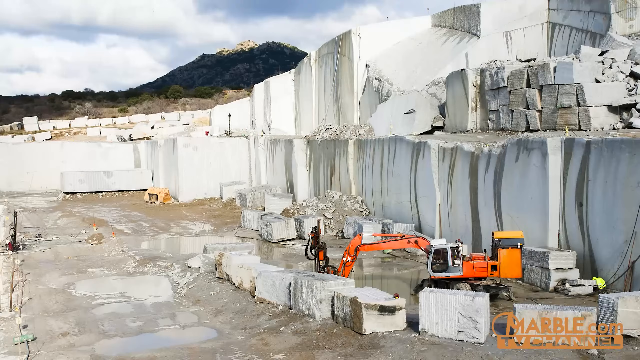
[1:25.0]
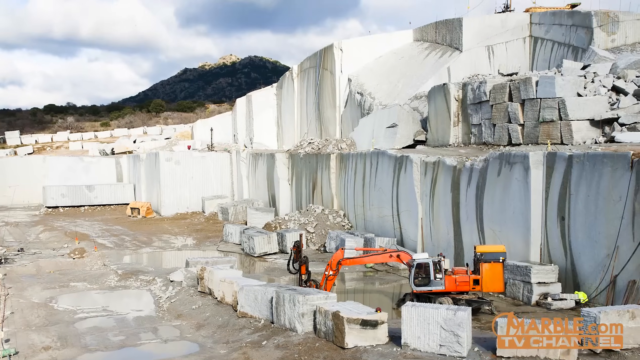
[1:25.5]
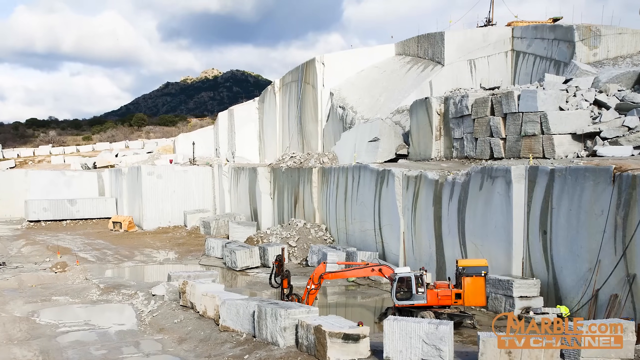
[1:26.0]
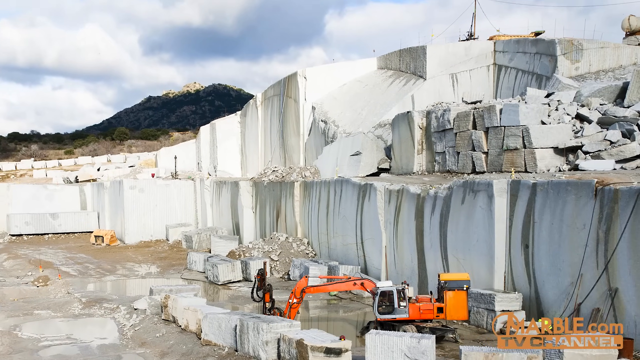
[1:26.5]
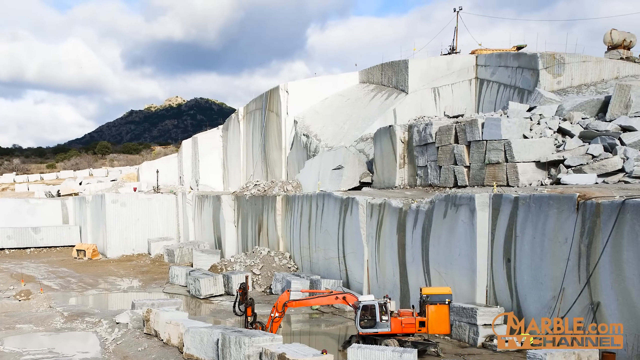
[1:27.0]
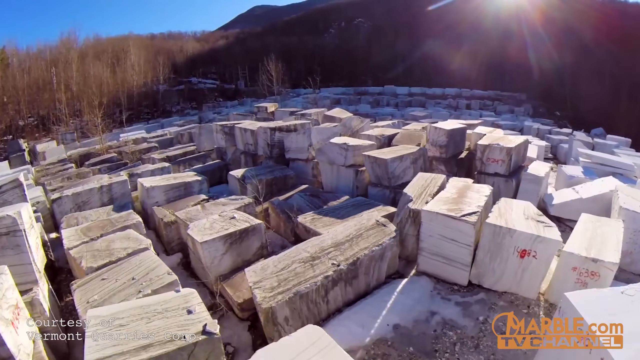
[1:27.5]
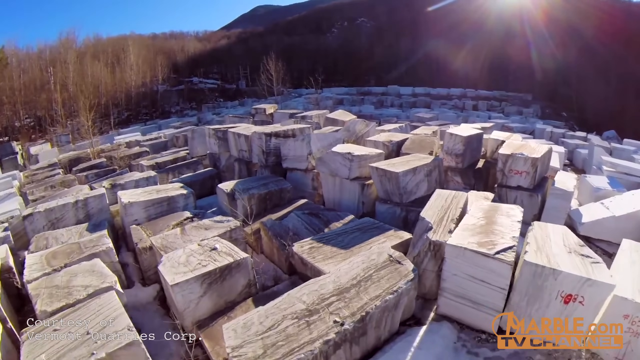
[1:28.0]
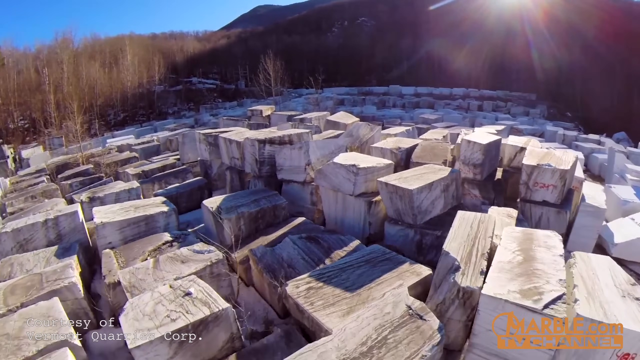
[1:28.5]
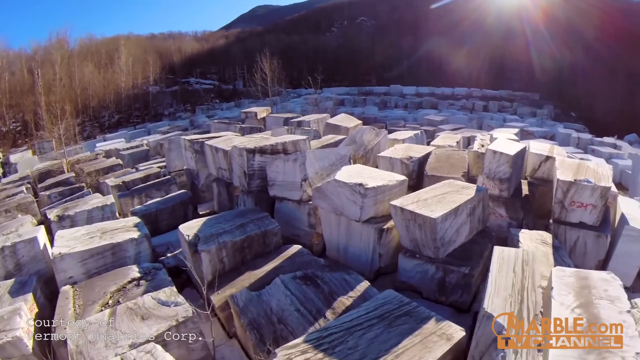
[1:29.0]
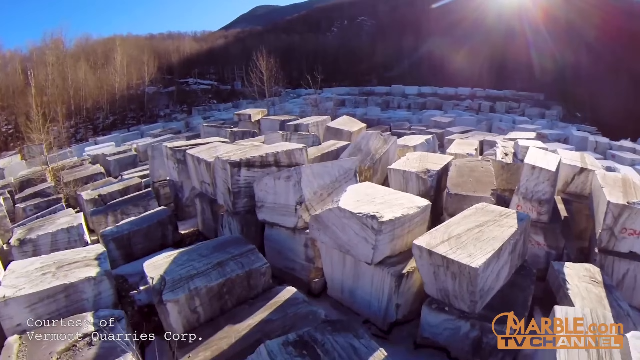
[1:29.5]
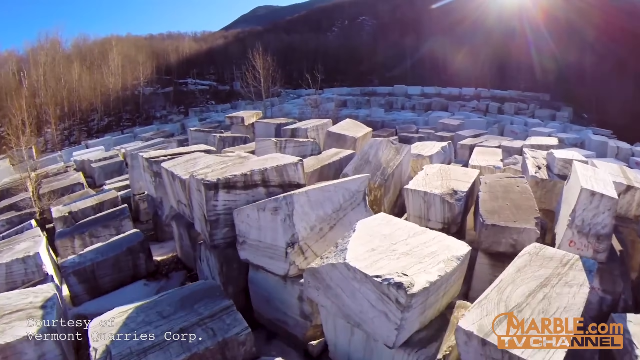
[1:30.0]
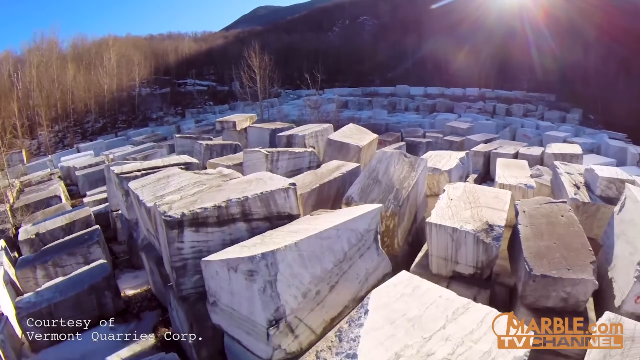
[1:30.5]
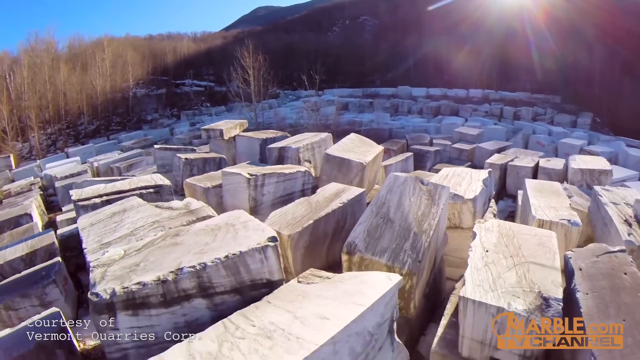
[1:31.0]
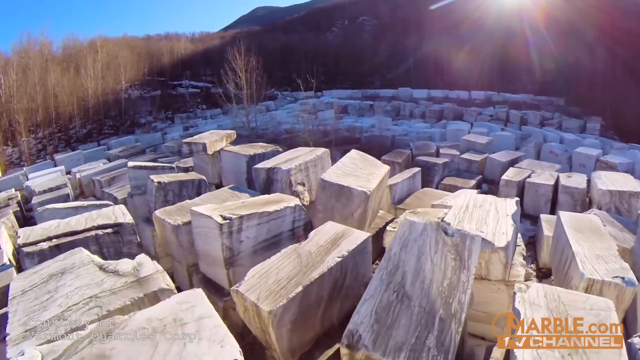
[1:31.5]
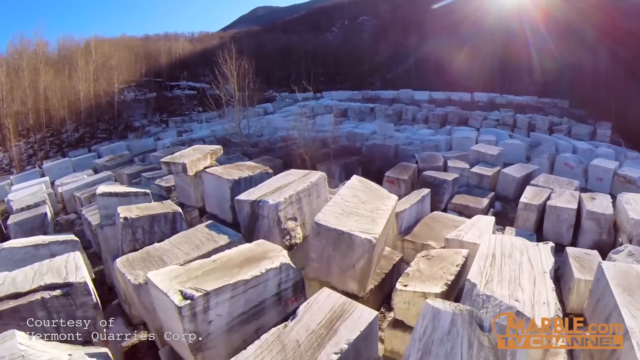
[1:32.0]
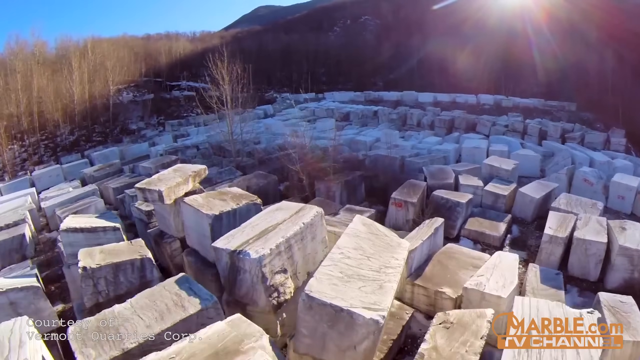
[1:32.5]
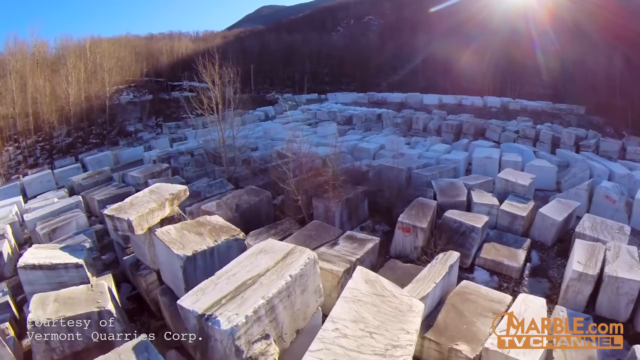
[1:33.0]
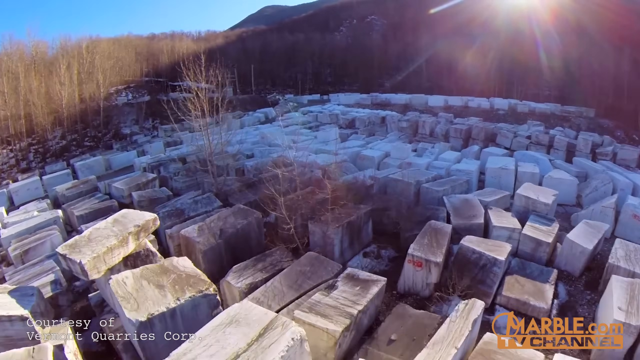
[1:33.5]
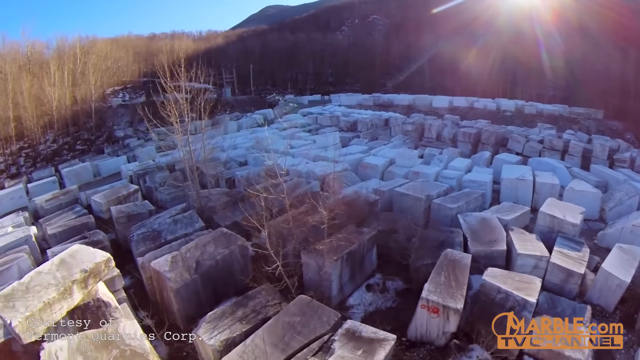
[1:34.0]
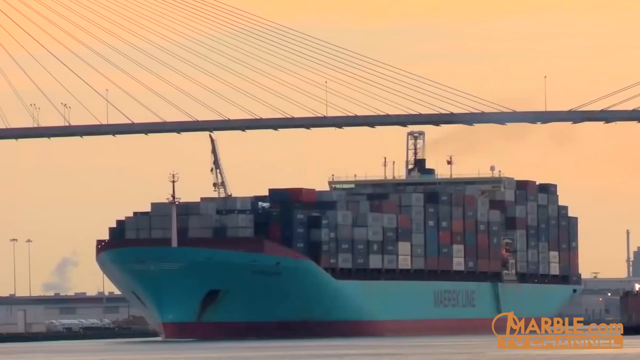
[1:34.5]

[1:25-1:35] The video pans over the picture of the worksite, moving to the right side, where more of the slabs are stacked up on a hill. Then an actual overview of the site moves over the top of big stacks of huge rectangular blocks of rock, all stacked somewhat neatly. In the background there is a forest on the left side and a hill on the right. A bit of sunshine comes over the top, and as the view moves toward the back, everything is in the shadow of the mountain. In the last part, a big barge stacked with shipment containers moves down a river.